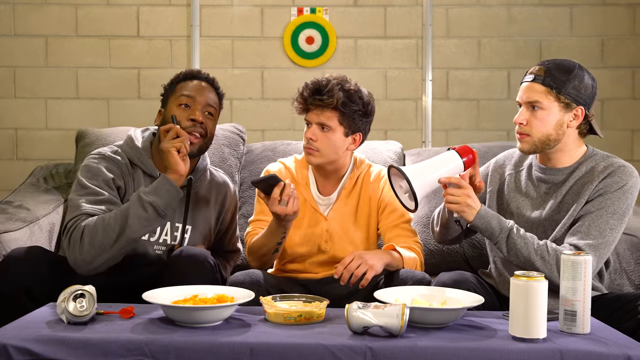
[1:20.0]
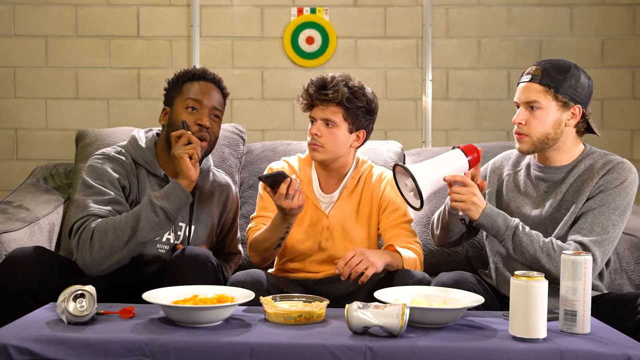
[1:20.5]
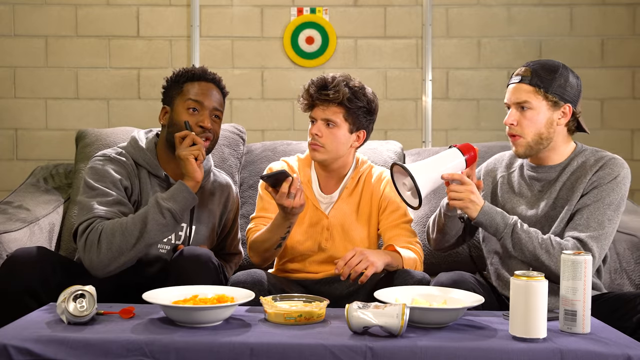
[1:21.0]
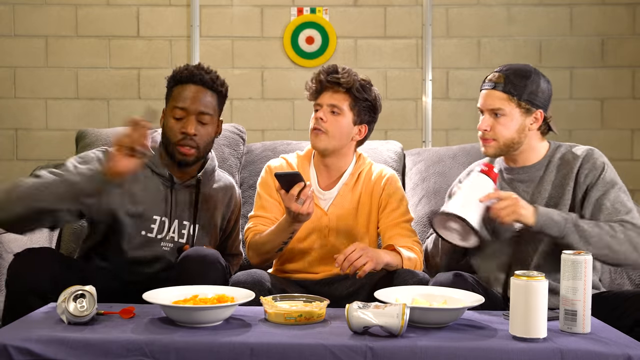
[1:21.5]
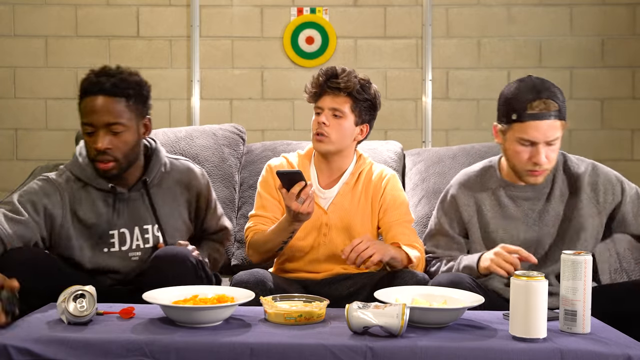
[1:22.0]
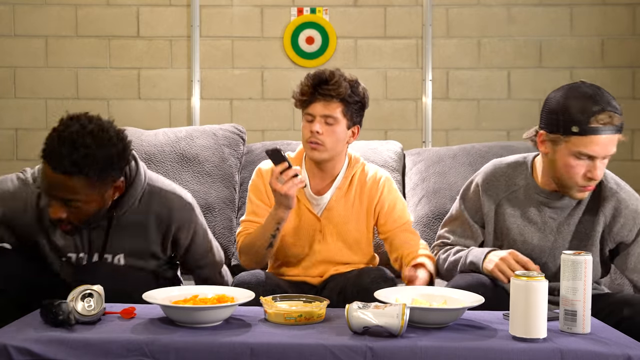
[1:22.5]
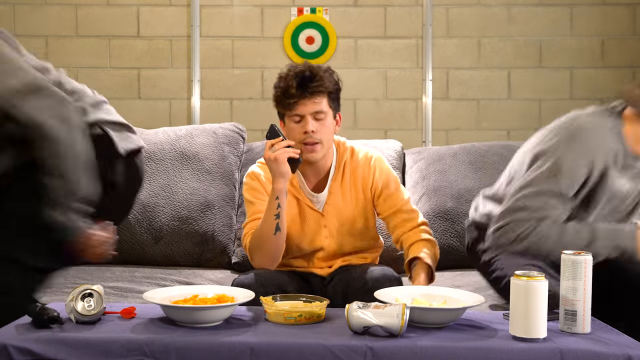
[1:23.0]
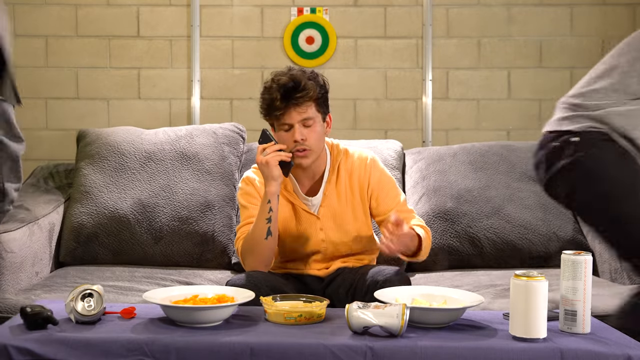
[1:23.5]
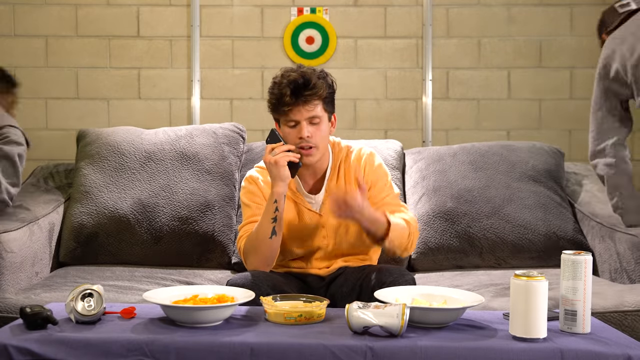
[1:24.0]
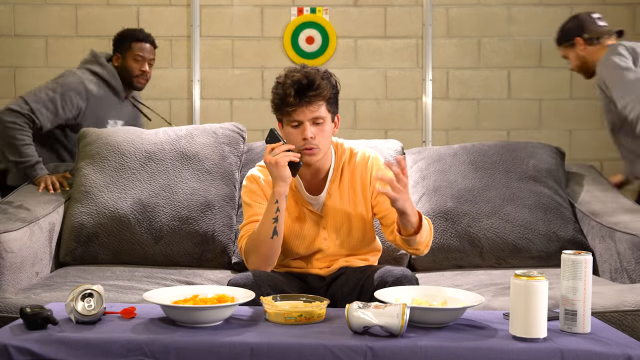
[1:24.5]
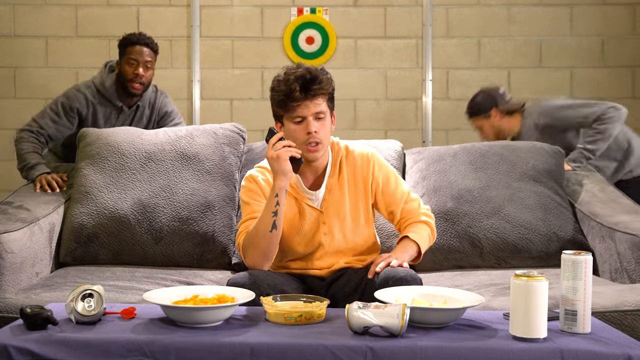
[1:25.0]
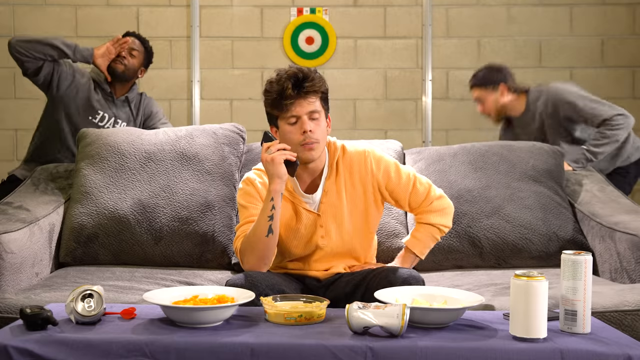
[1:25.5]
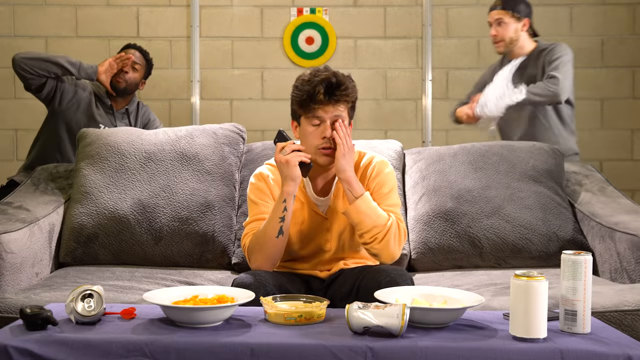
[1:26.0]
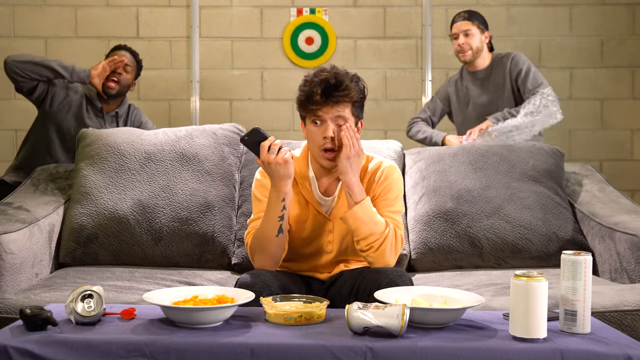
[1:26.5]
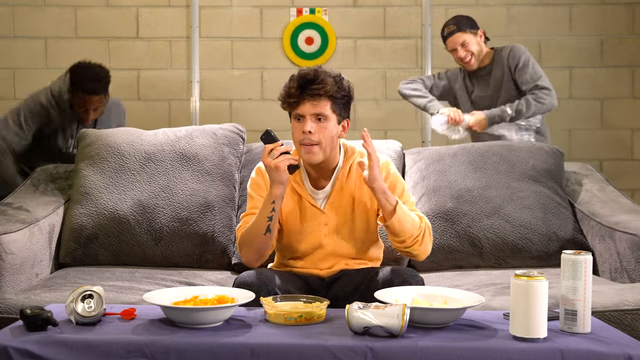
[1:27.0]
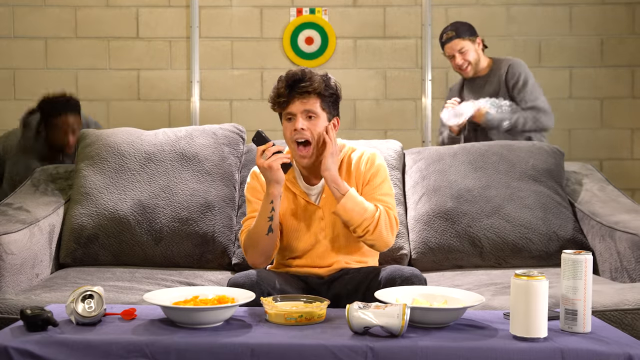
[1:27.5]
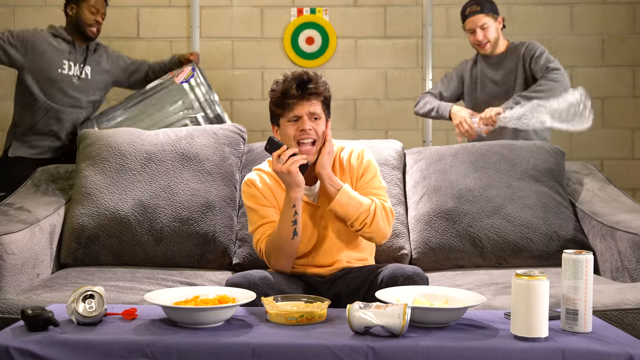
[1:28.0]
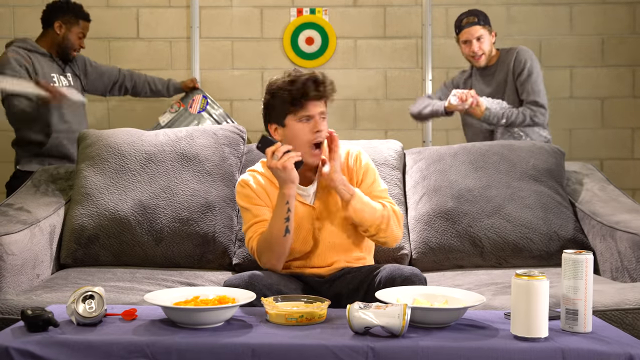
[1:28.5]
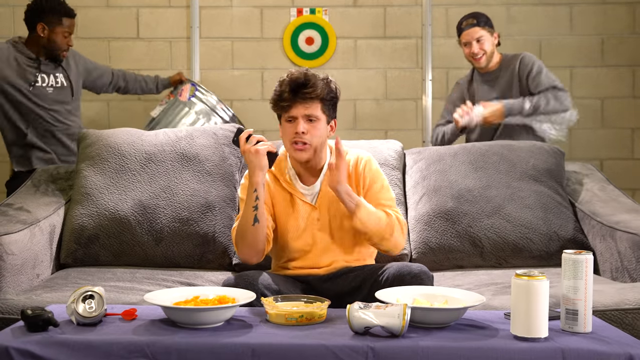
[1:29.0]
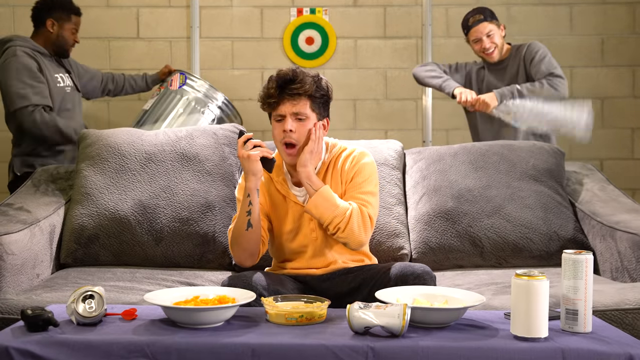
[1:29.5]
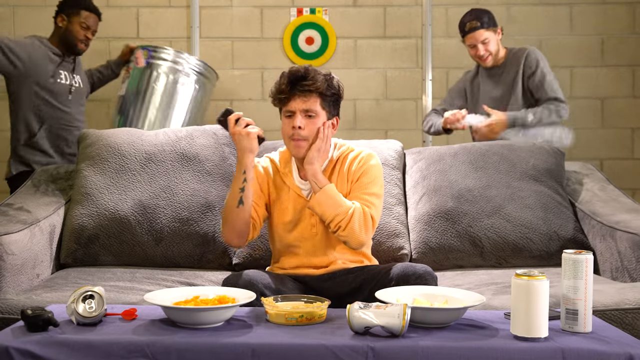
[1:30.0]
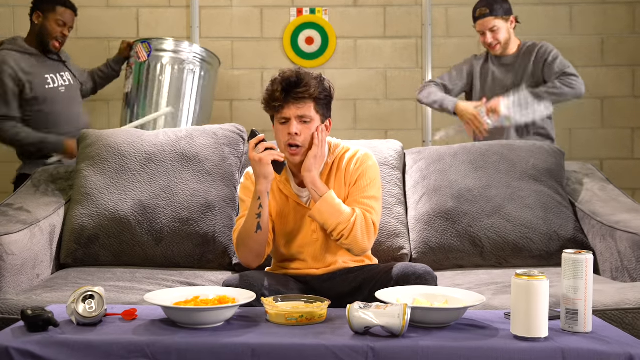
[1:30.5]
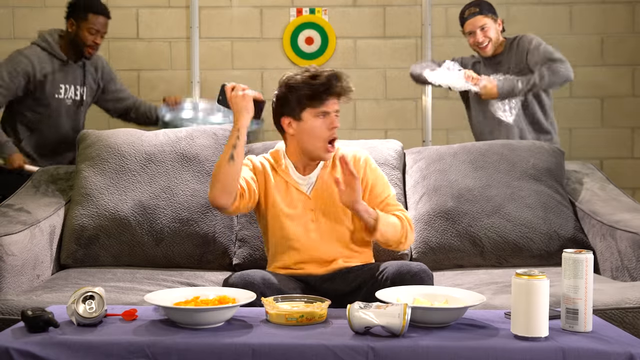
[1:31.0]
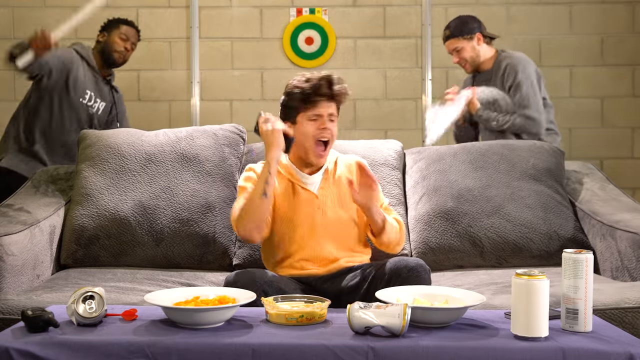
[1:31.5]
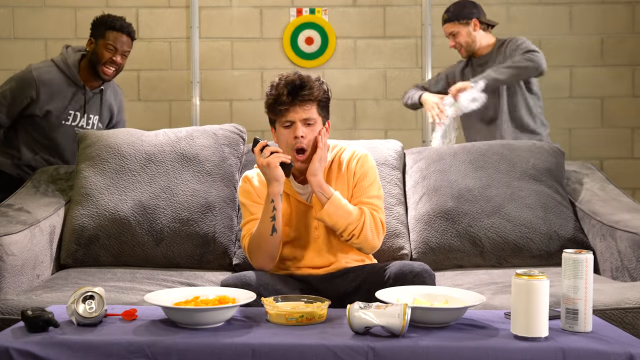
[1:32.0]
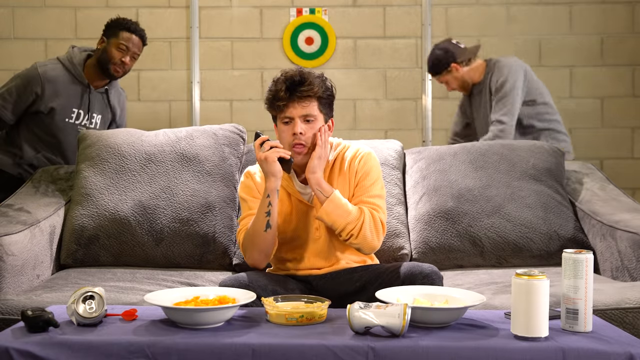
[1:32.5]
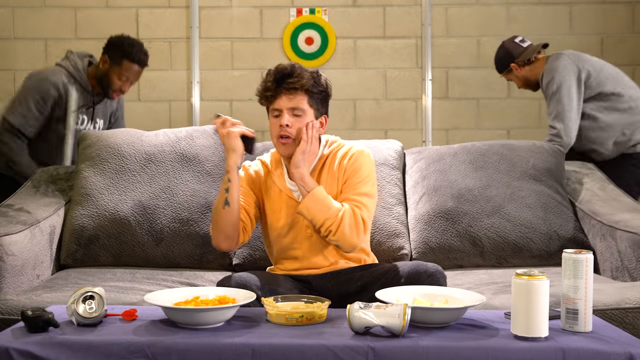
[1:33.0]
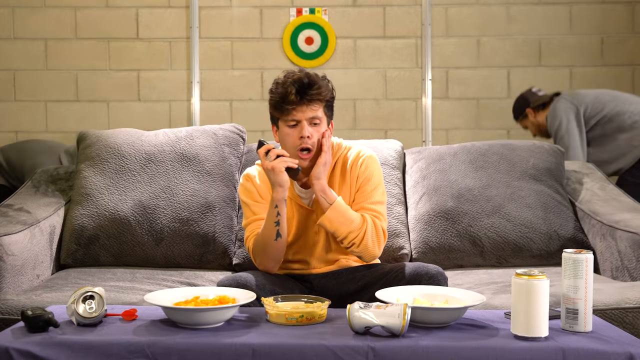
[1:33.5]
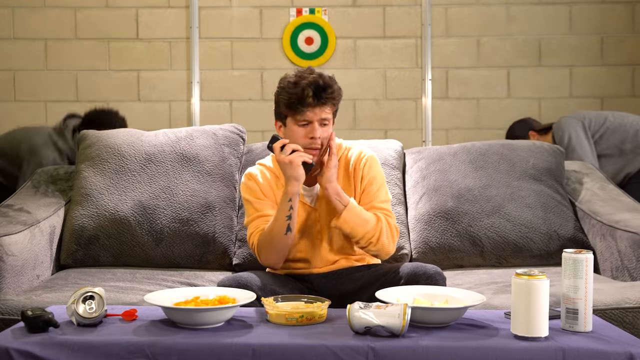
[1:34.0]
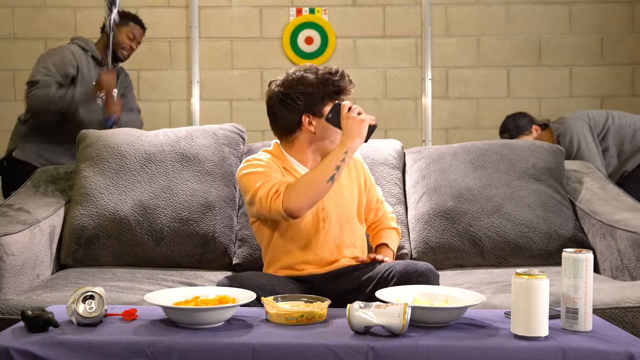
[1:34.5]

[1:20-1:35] The man on the left is on the walkie-talkie and the man on the right has the megaphone. The two men on either side of the man in orange on the phone then jump up from the couch and run around to the back of it. The man on the left, a black man, starts yelling, picks up a very large metal trash can and a long brown stick, and starts hitting the trash can loudly. The man on the right picks up bubble wrap and squeezes it to make it pop. When he is done with the stick, the man on the left quickly picks up what looks like a baseball bat and hits the garbage can, which is now on the floor. The whole time, the man is still trying to talk on the phone; he looks like he is talking loudly and at some point tries to cover his ears.